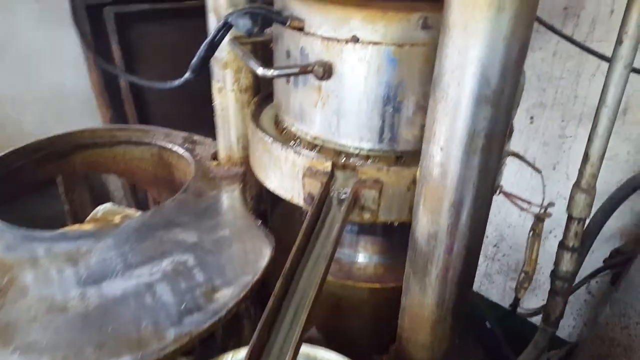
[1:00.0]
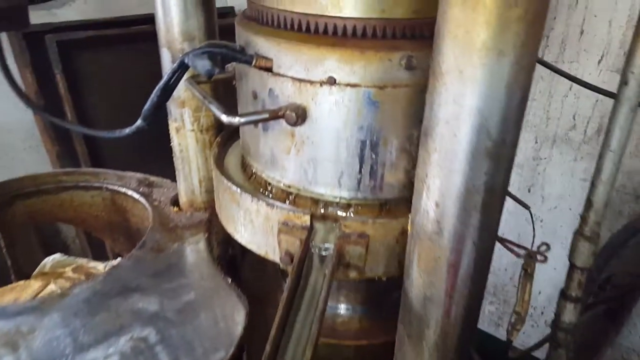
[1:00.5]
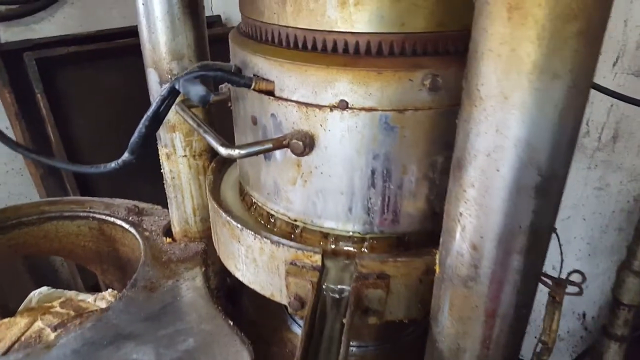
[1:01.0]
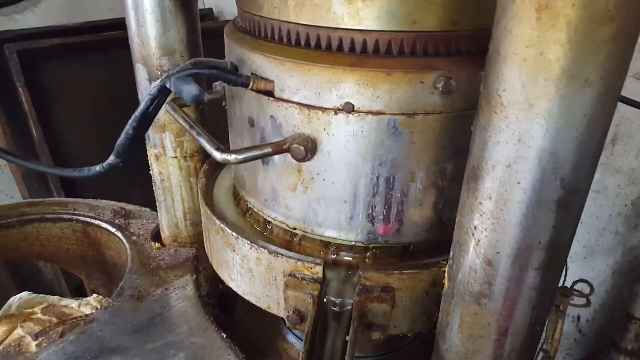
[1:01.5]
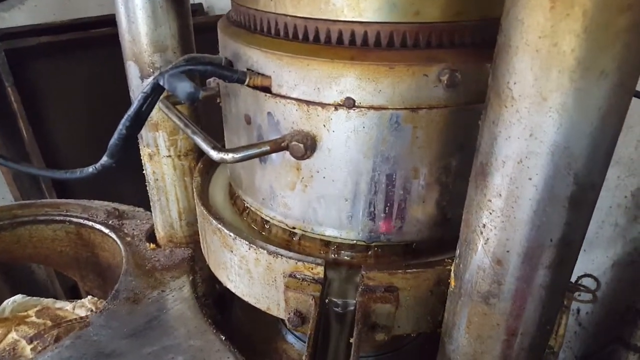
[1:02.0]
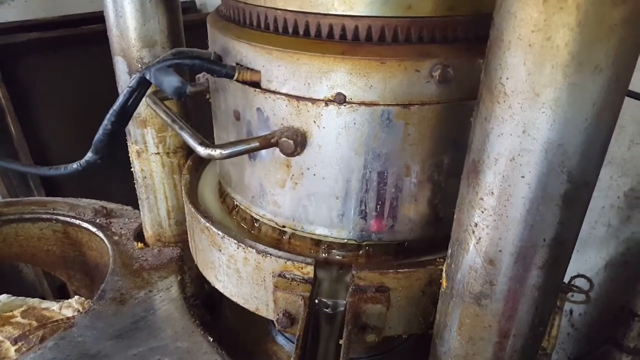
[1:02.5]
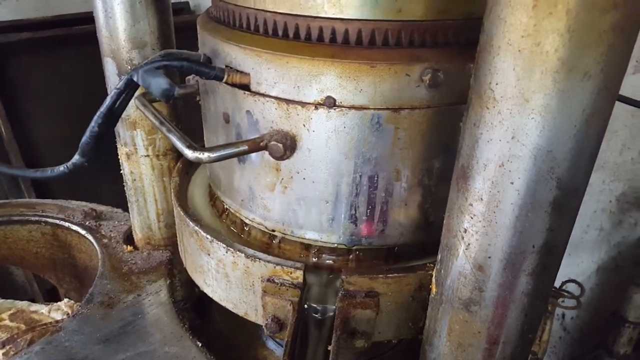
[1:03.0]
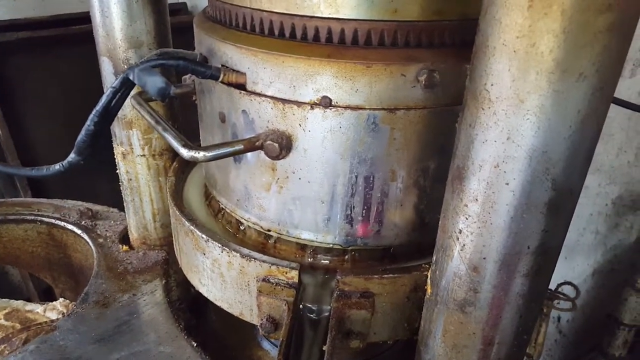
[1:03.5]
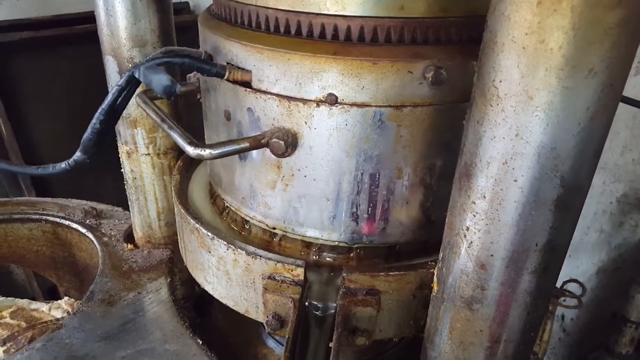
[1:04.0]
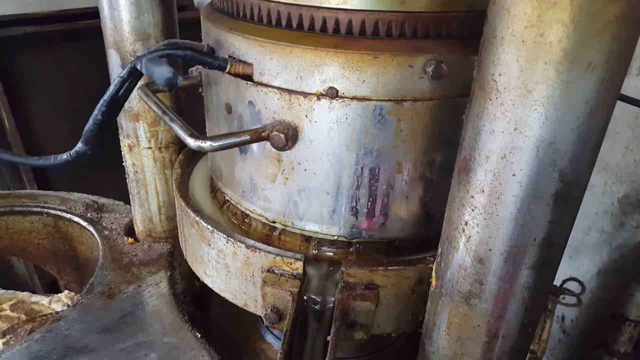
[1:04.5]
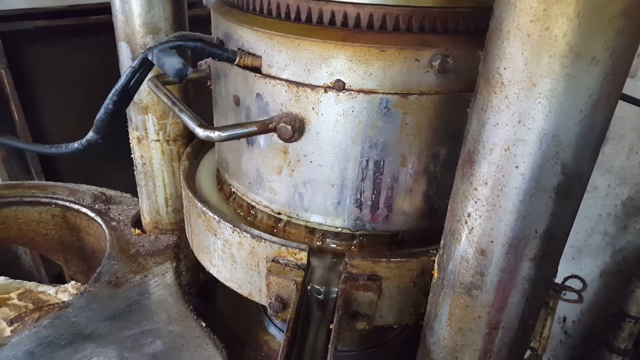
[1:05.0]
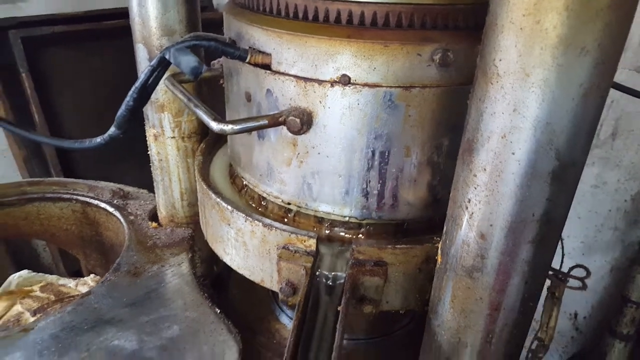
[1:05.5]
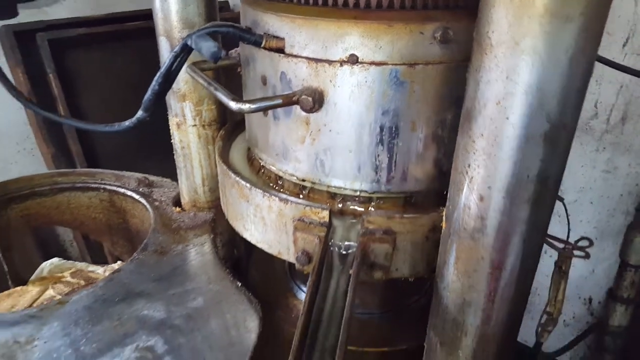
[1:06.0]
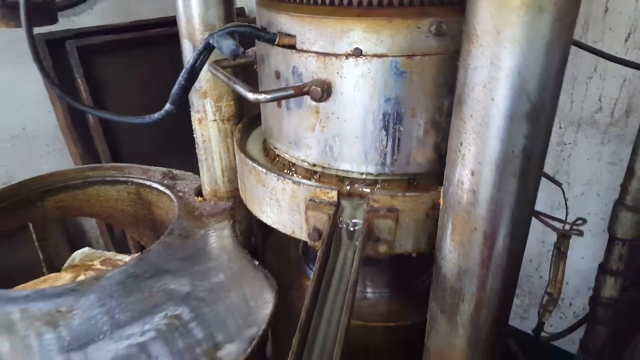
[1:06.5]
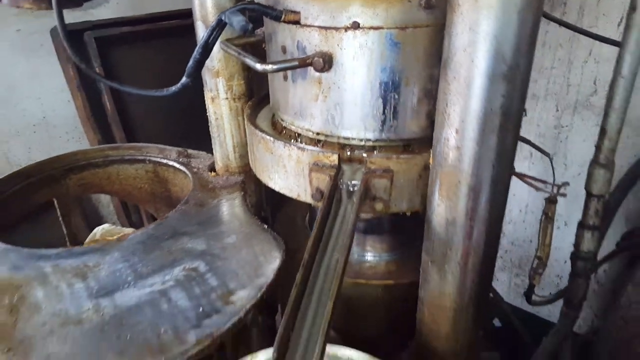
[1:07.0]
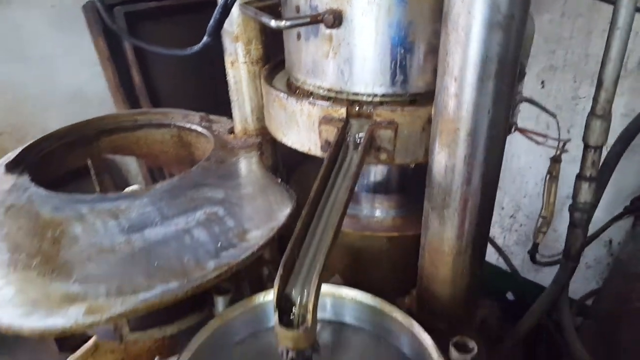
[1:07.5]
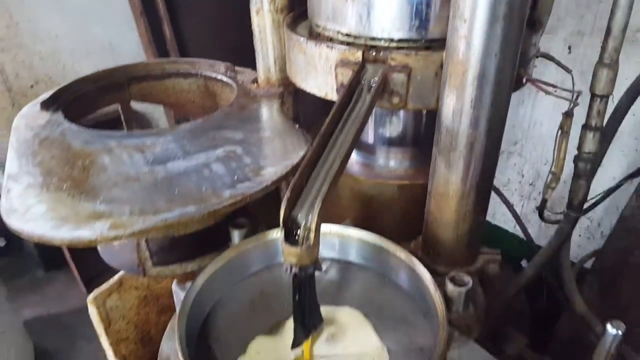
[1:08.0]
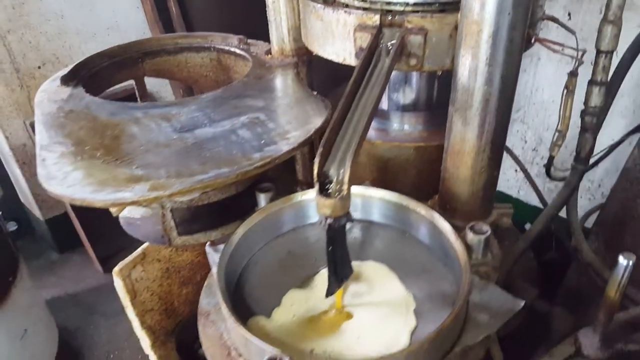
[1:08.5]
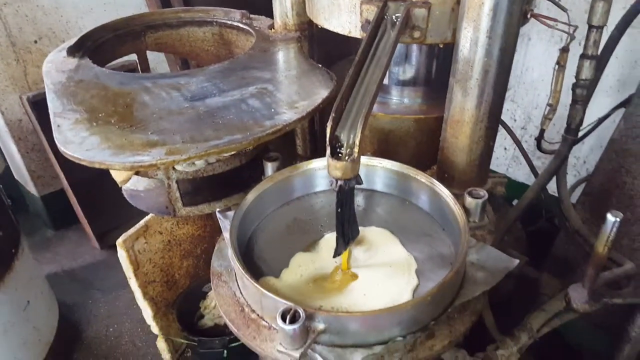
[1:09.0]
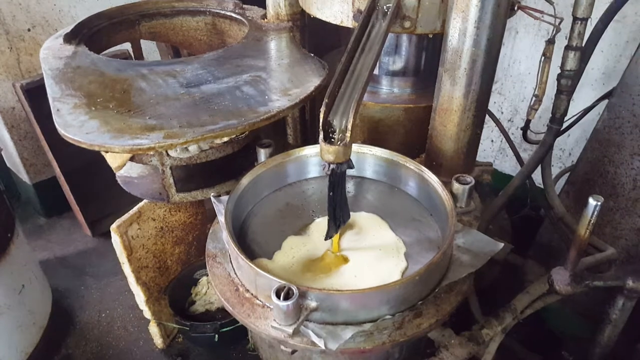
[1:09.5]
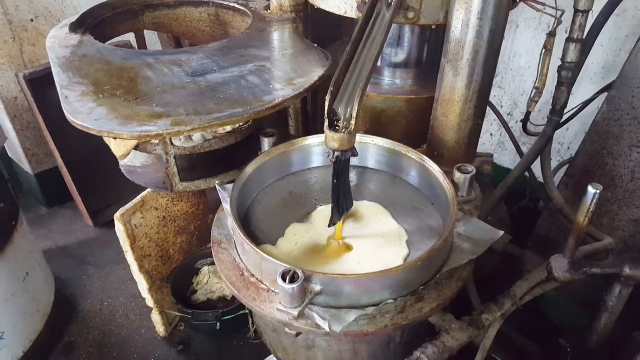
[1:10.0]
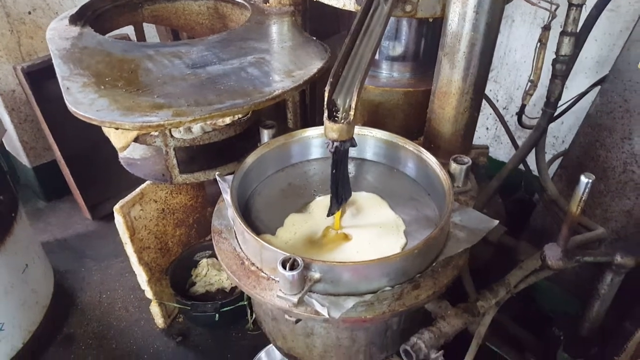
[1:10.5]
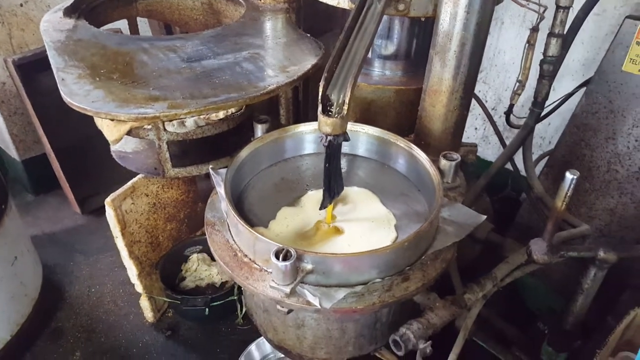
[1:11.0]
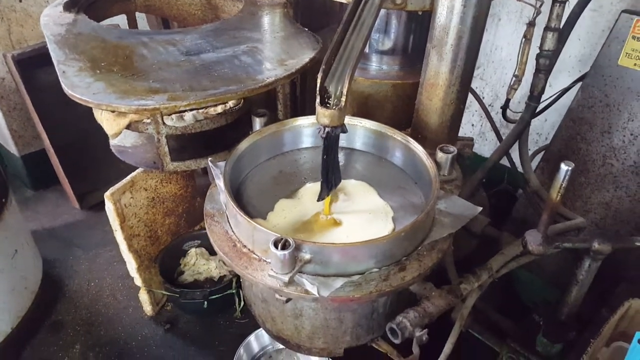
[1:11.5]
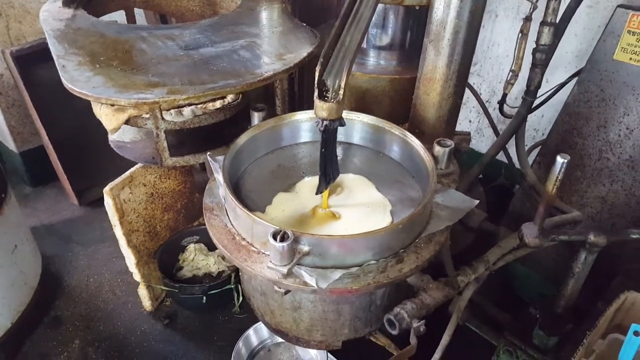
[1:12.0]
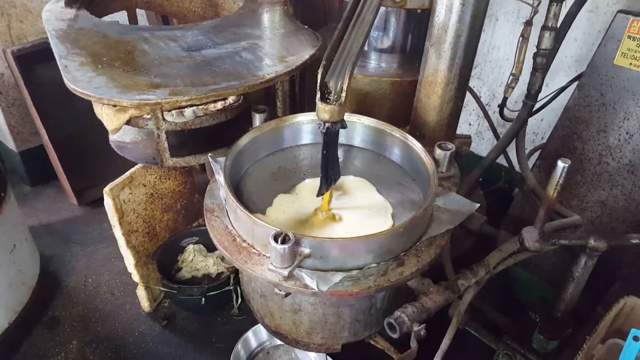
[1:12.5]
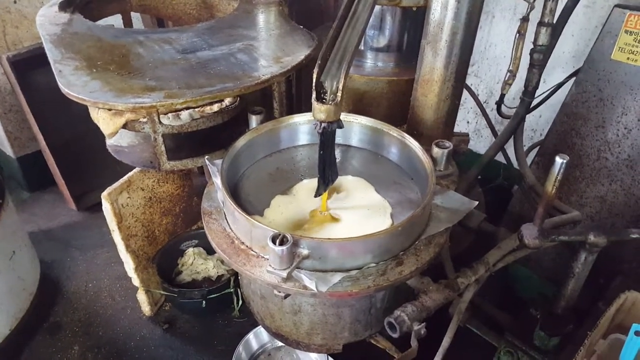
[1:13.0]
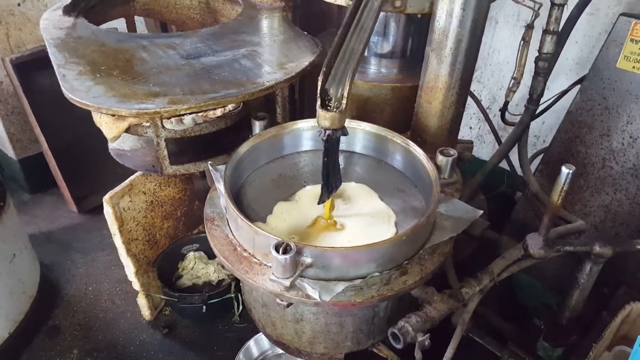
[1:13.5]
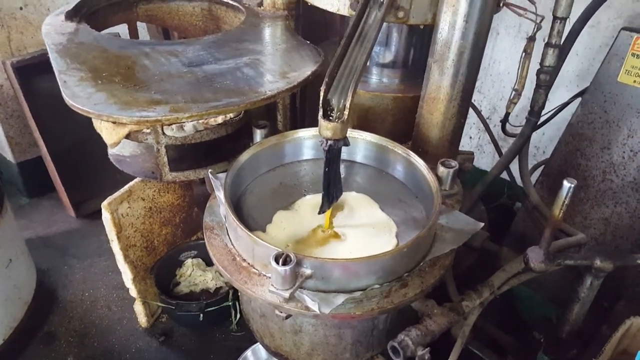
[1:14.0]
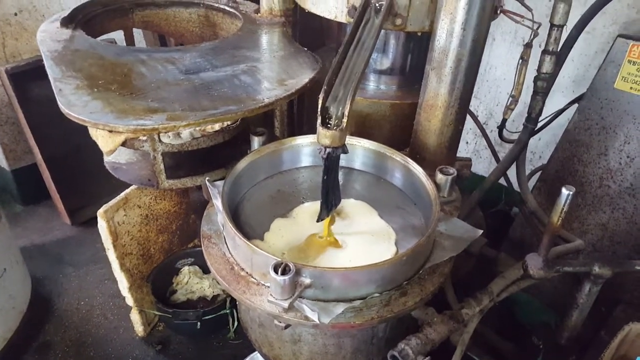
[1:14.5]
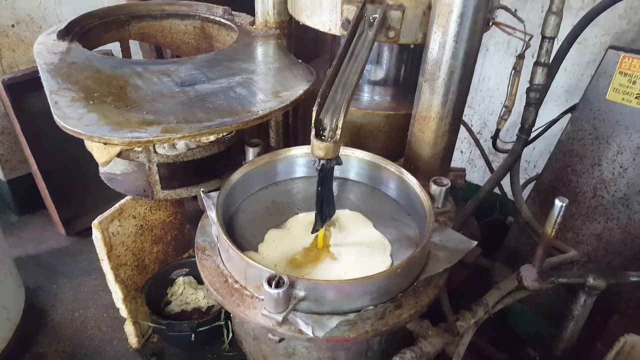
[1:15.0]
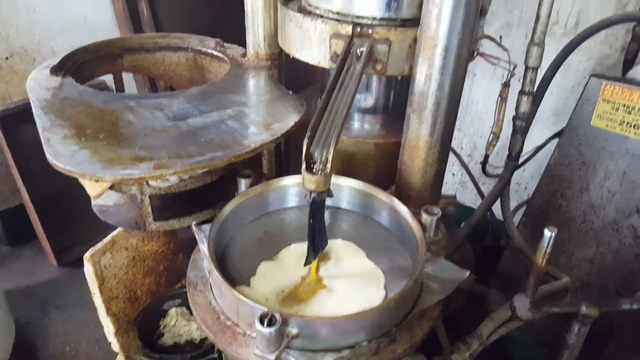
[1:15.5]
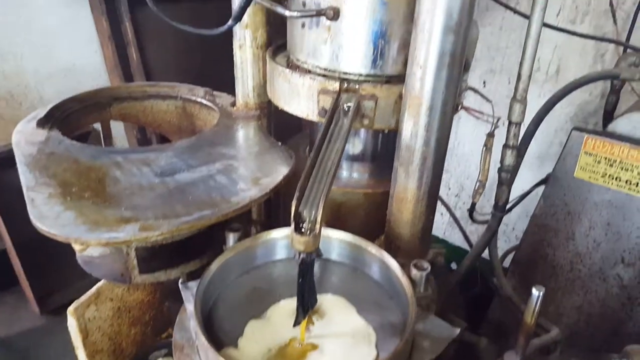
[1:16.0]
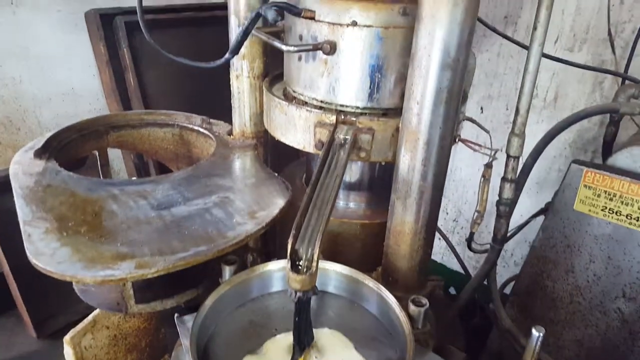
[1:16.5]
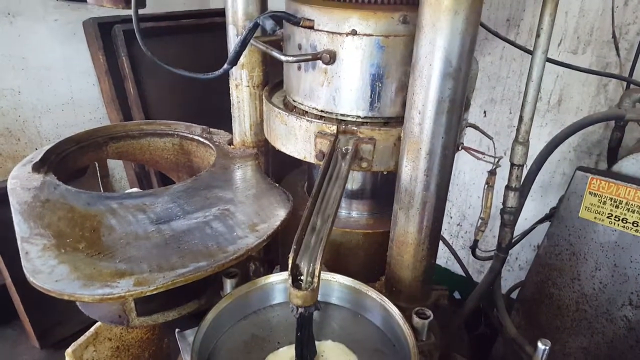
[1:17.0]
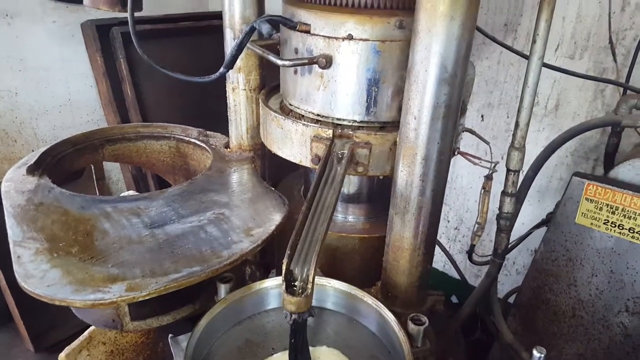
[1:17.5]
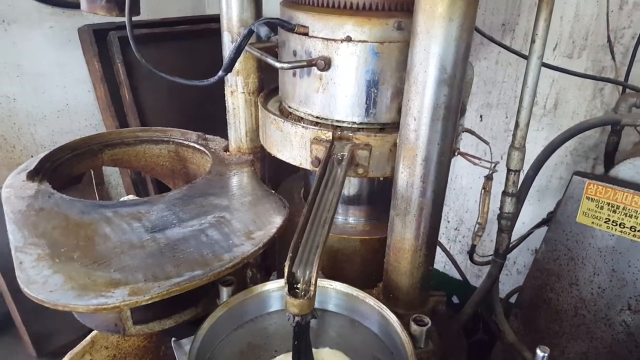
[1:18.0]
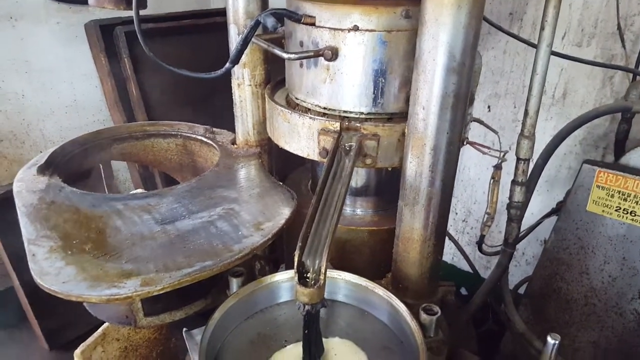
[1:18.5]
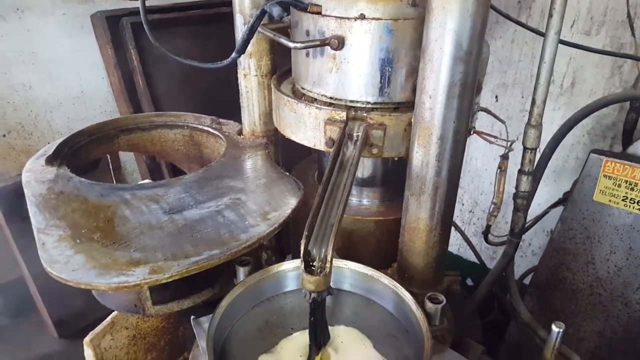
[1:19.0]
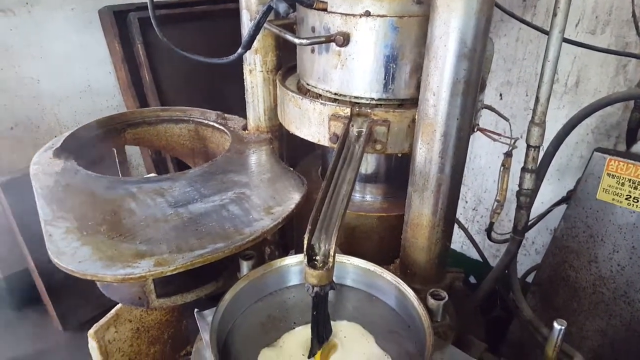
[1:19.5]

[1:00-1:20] Liquid collects on the sides of the piston and comes out of the irrigation canal in front. The camera zooms out again to show the liquid continuing to collect, flowing towards the front of the bowl and continuing to foam out to the left and right. The liquid appears to now be flowing faster, visibly rushing off of the canal. A small amount of smoke shows in the bottom left, flowing upward towards the right side. Surrounding the metal bowl are three what appear to be bolts or rods; the bowl appears to be resting on a wide base with these three rods coming out of it. Off to the right side, pipes come off of the base of the structure and come up towards the right side; there appear to be two pipes separating off from each other, then reconnecting at a central pipe in the top right of the frame, which connects to a larger pipe that goes up to the top of the machinery. The smoke drifts across the screen as the camera rests on the piston.